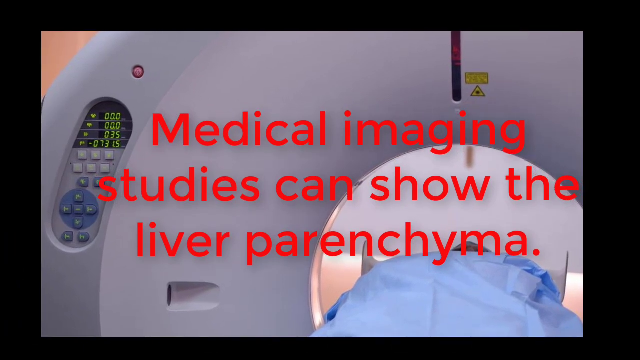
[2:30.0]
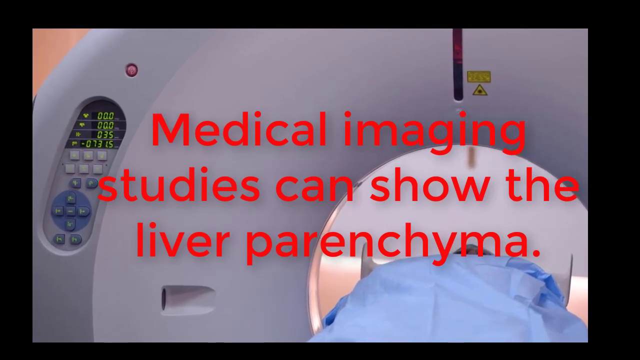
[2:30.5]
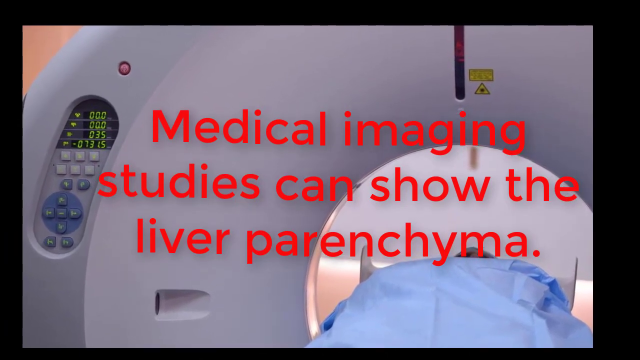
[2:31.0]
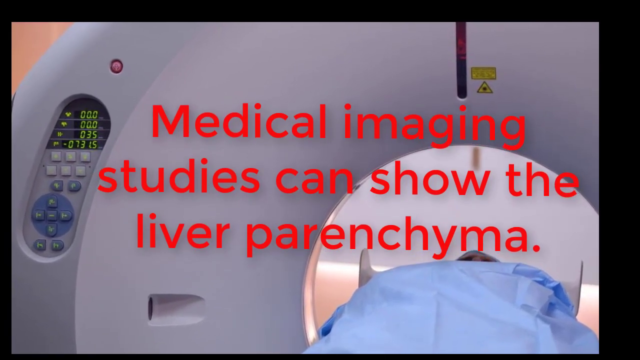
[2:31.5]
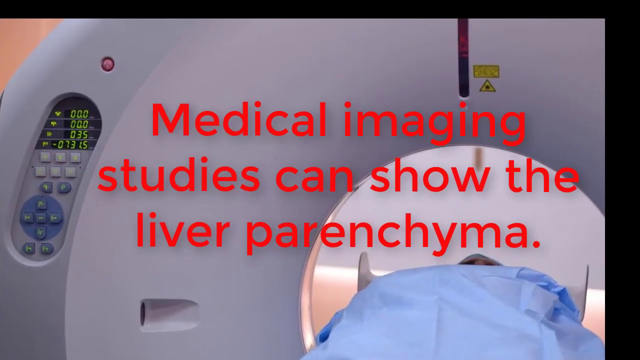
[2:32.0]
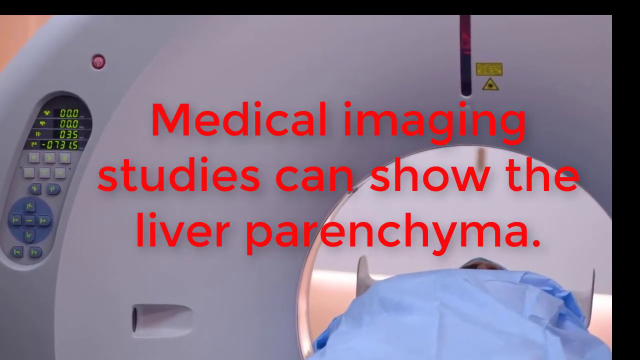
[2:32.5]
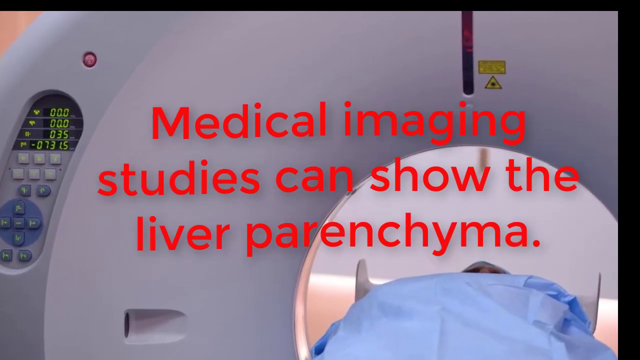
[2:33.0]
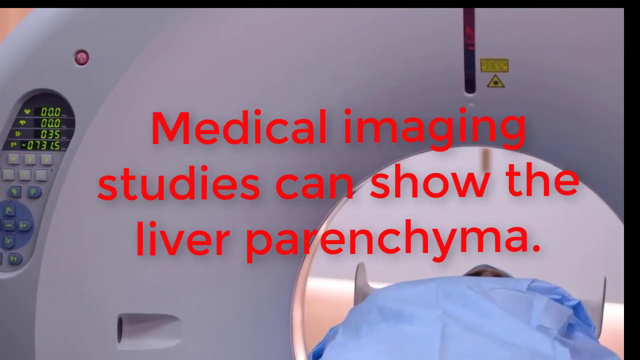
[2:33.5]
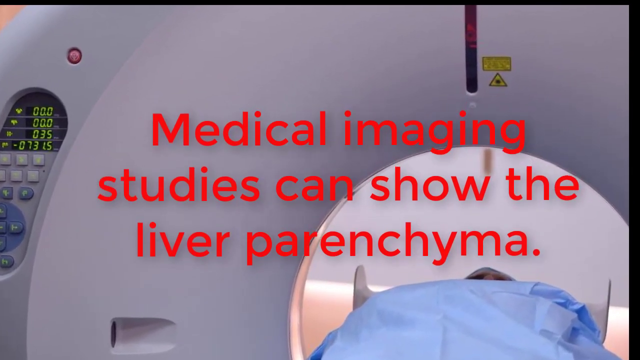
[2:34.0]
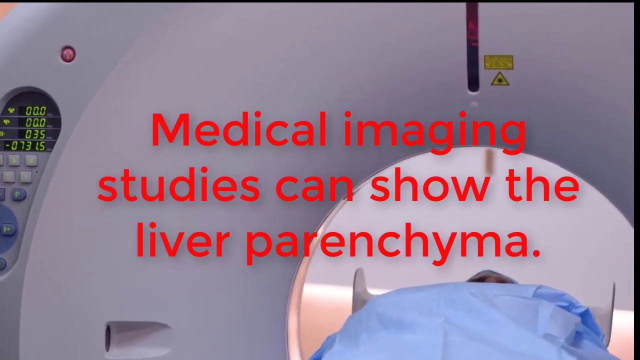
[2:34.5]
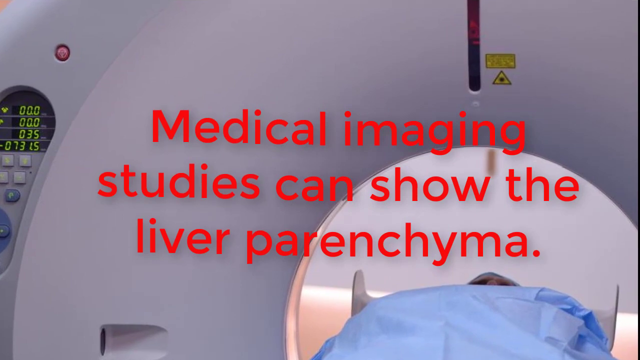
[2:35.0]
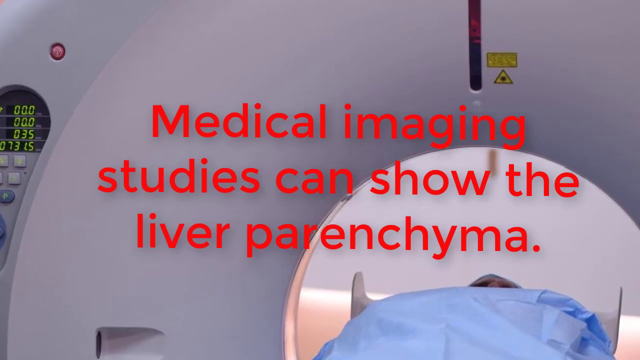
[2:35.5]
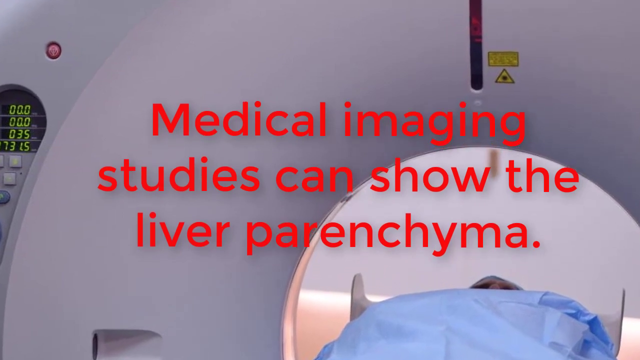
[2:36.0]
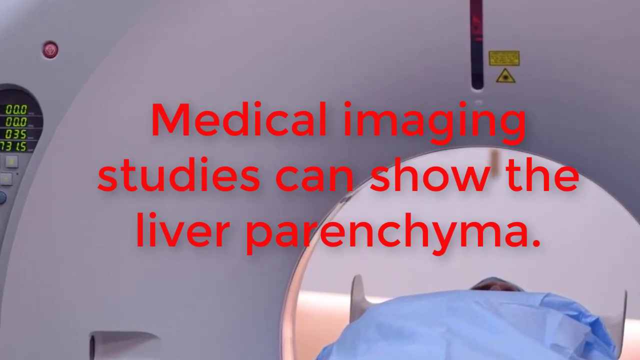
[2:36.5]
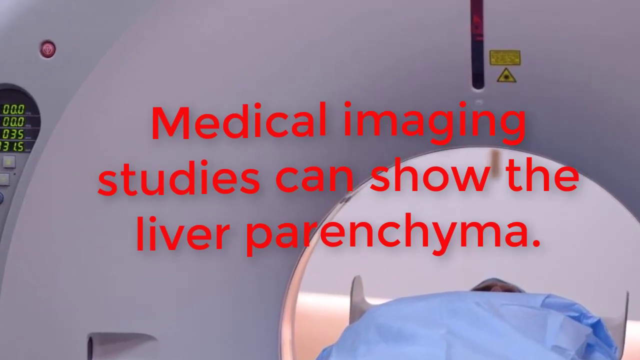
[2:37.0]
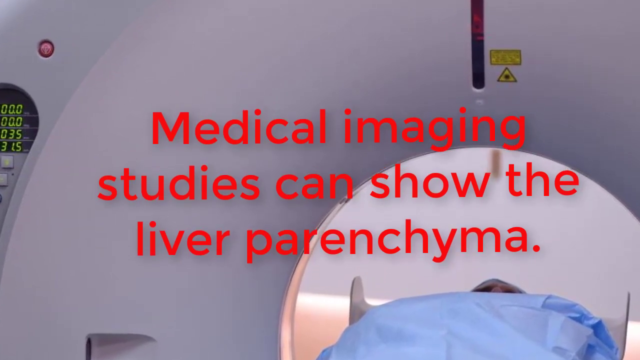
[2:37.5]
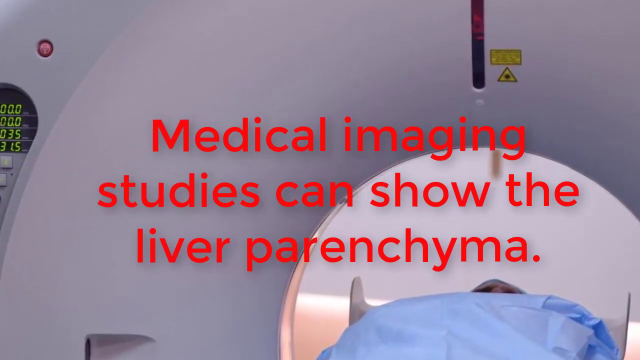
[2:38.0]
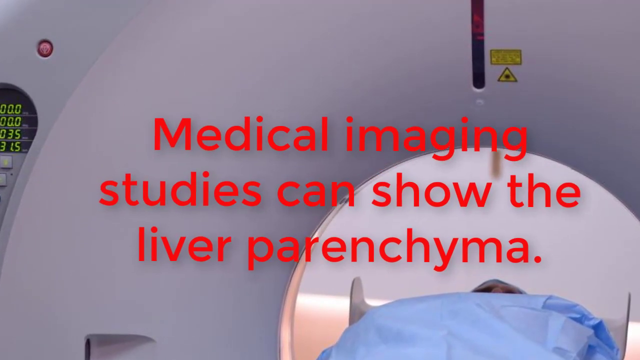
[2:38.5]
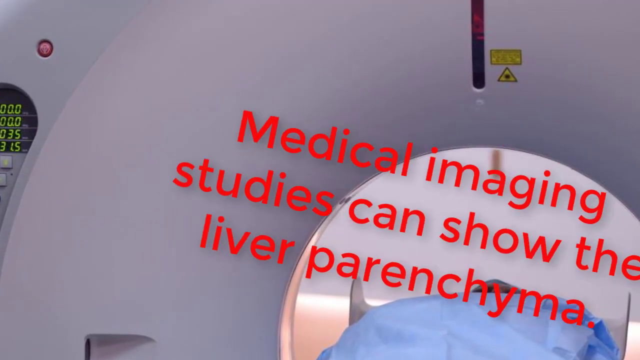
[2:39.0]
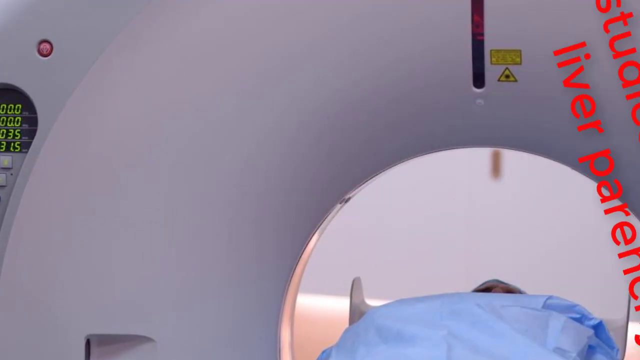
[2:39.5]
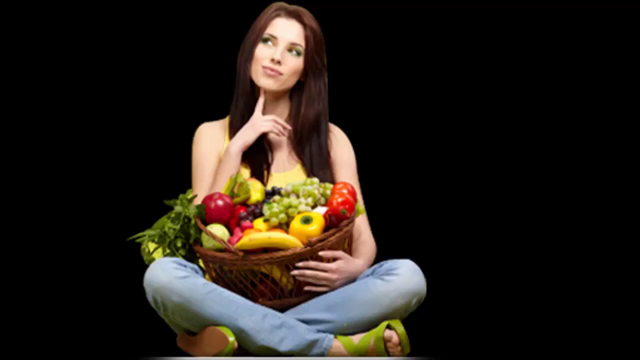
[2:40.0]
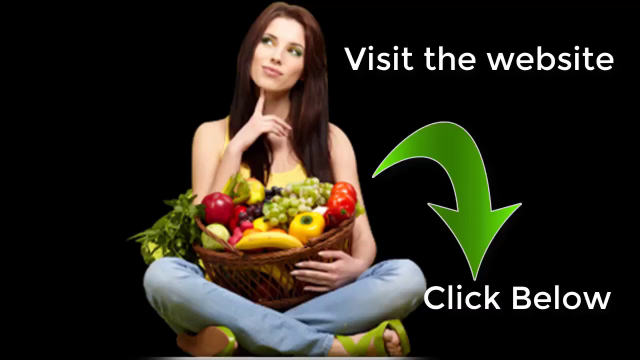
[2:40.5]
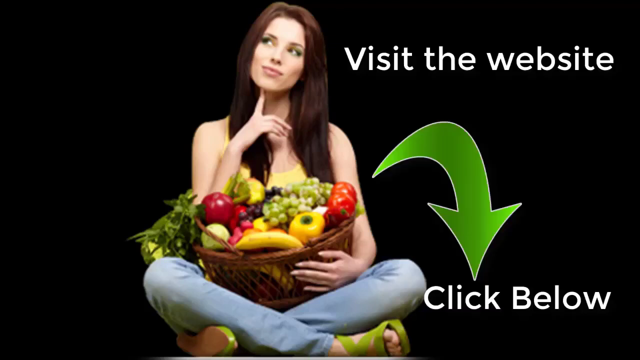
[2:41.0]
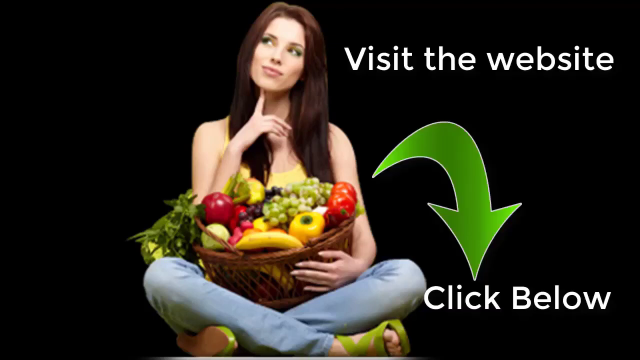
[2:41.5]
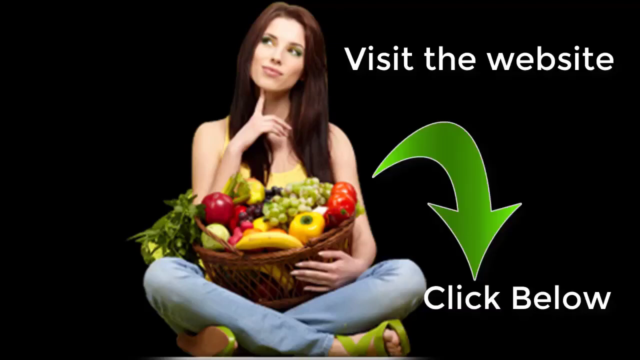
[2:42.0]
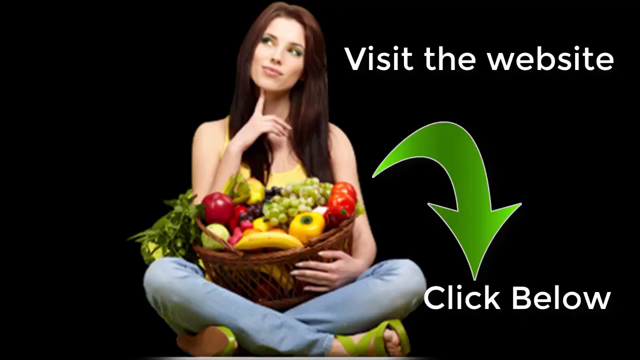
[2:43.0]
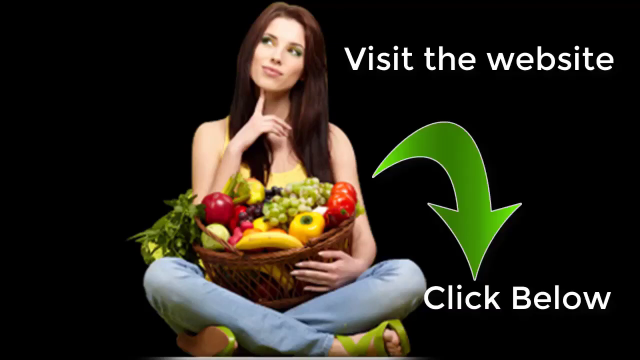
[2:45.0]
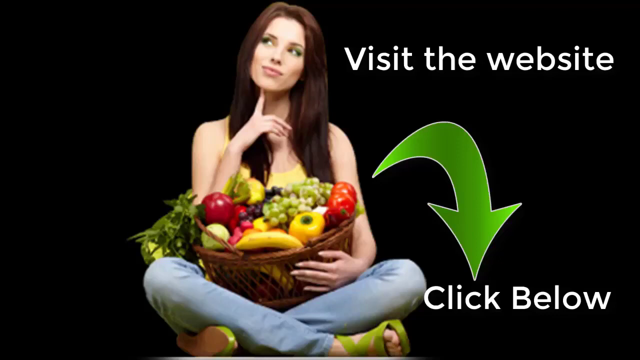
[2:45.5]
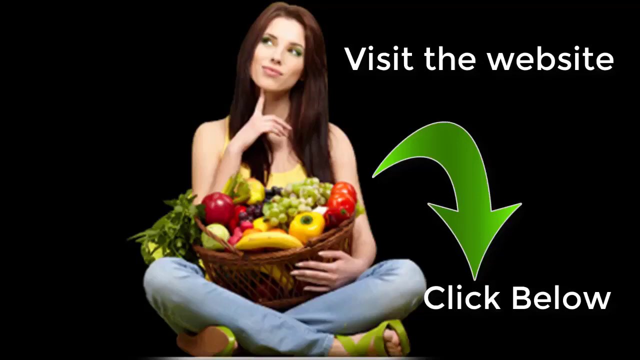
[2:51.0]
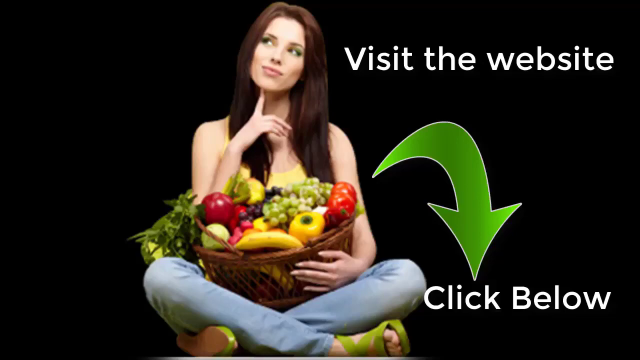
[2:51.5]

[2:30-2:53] An image of an MRI machine shows a patient being put into it, kind of covered in a blue sheet. Red text in the foreground reads "medical imaging studies can show the liver parenchyma." The camera zooms in for a closer view of the MRI while the text kind of wiggles like a wave. The text kind of bounces down a little, then flies to the right in a sideways motion and disappears. It then cuts to a woman sitting on the floor with her legs crossed, holding a fruit basket. Her right hand is bent with her index finger touching her chin, almost like she is thinking.